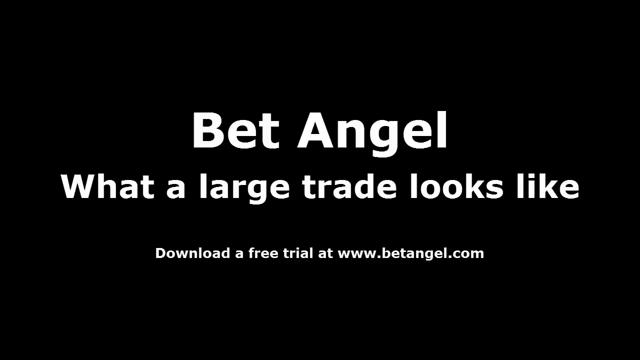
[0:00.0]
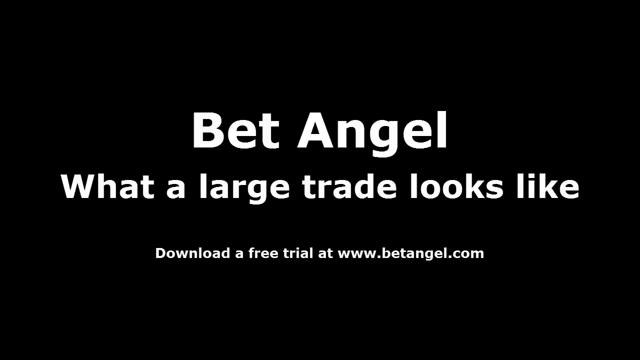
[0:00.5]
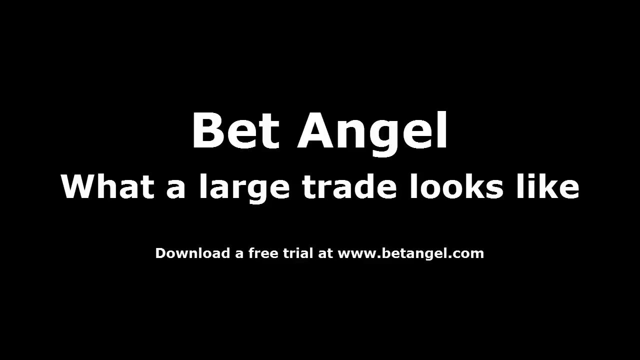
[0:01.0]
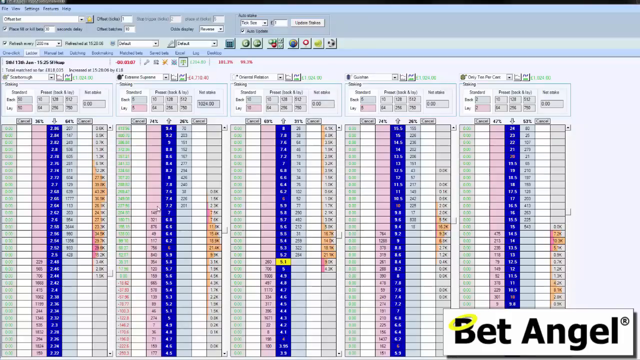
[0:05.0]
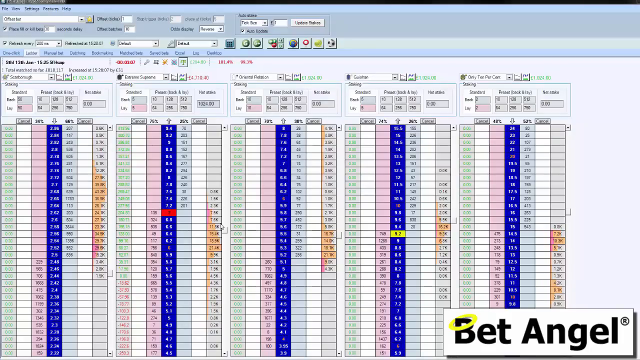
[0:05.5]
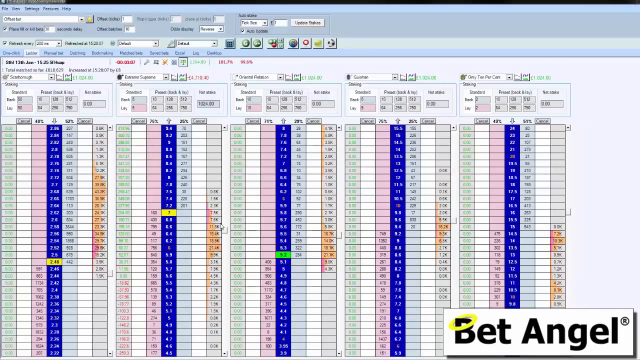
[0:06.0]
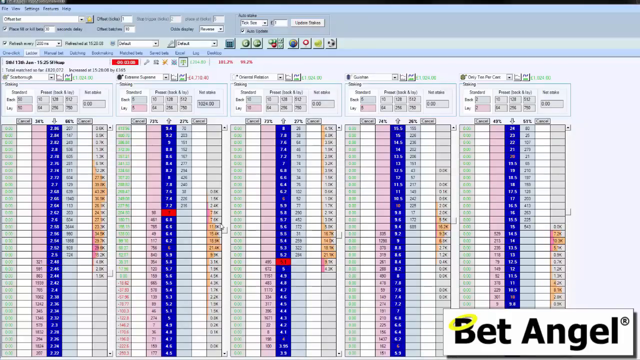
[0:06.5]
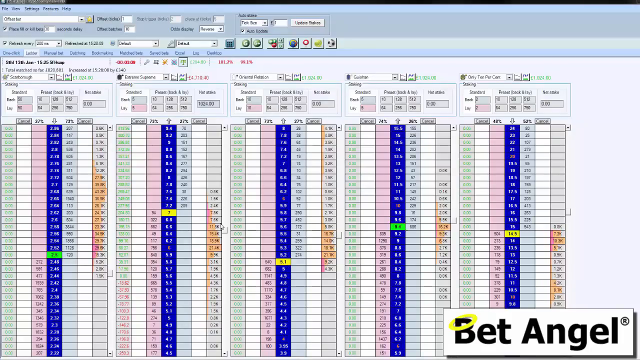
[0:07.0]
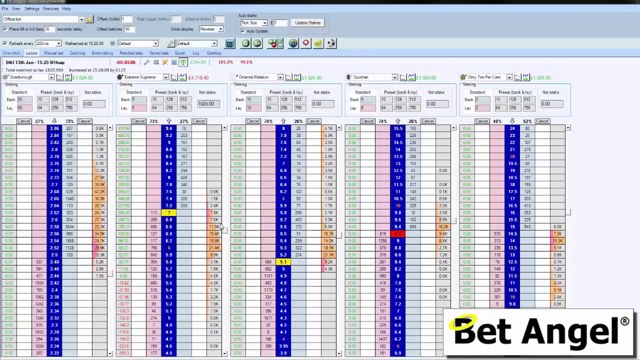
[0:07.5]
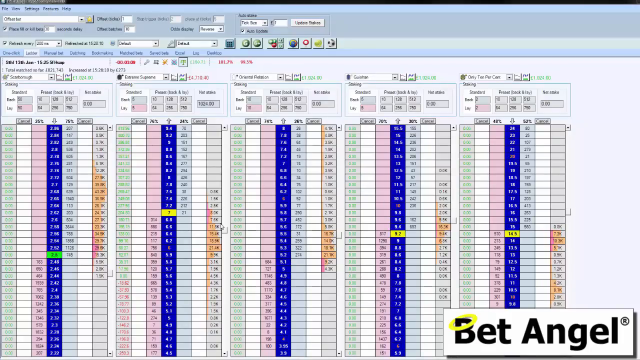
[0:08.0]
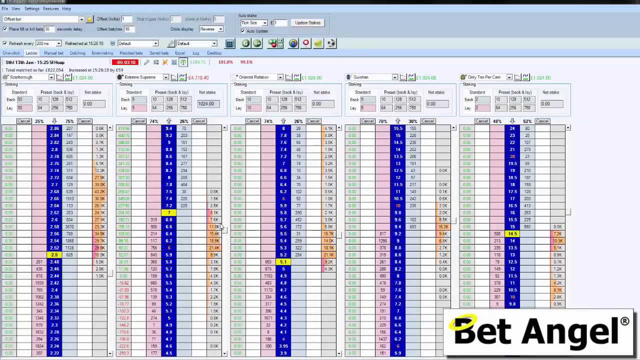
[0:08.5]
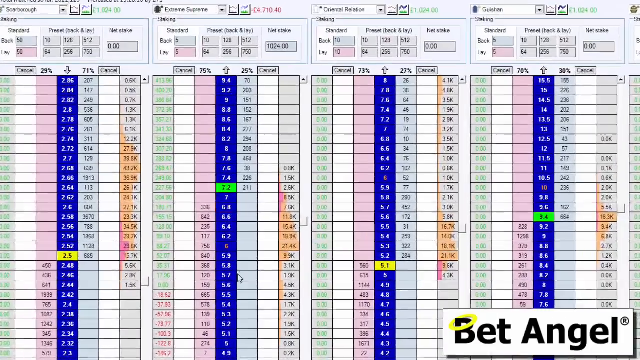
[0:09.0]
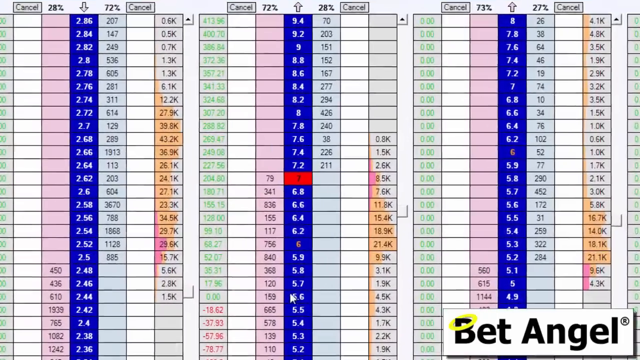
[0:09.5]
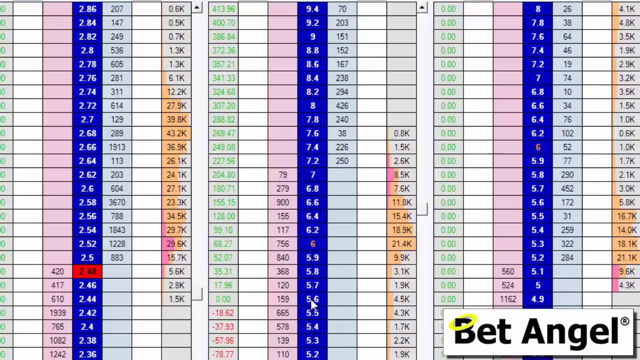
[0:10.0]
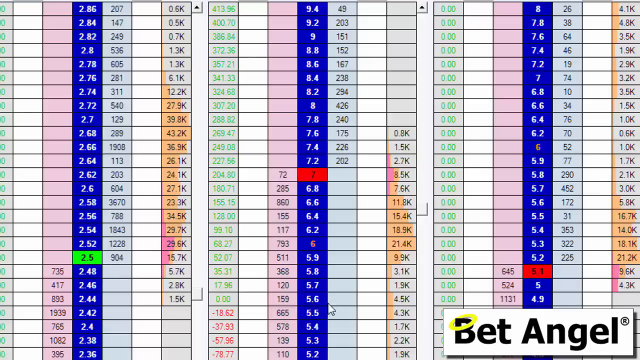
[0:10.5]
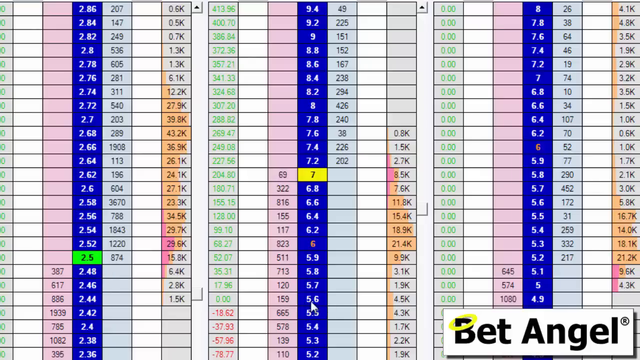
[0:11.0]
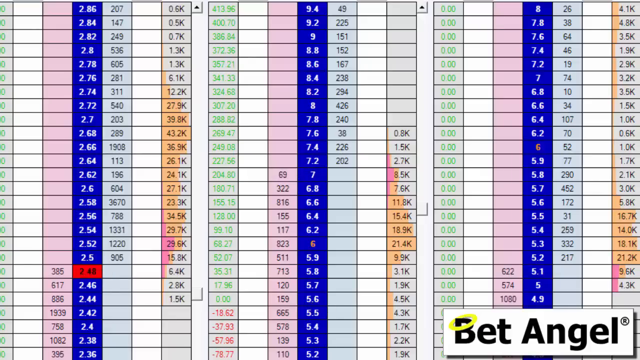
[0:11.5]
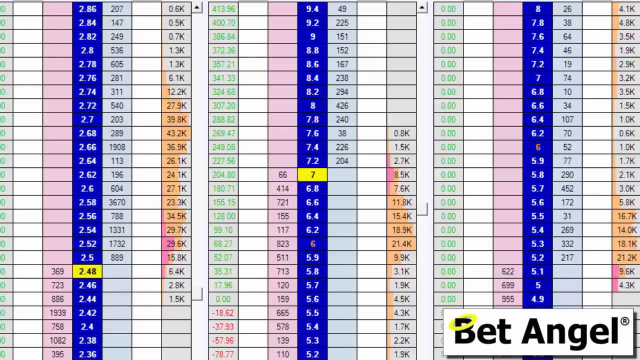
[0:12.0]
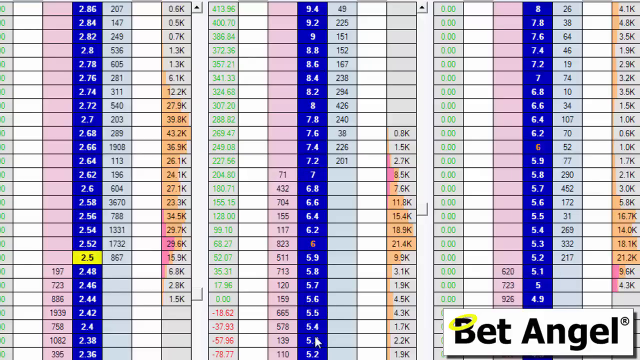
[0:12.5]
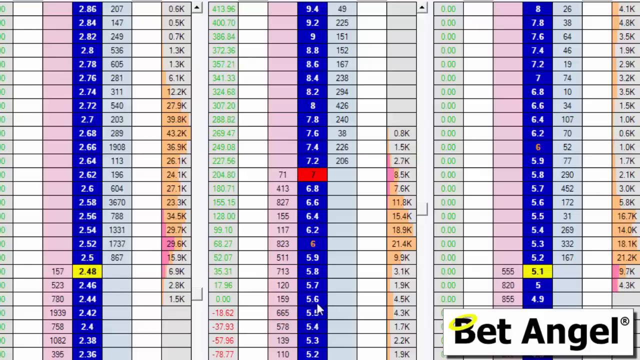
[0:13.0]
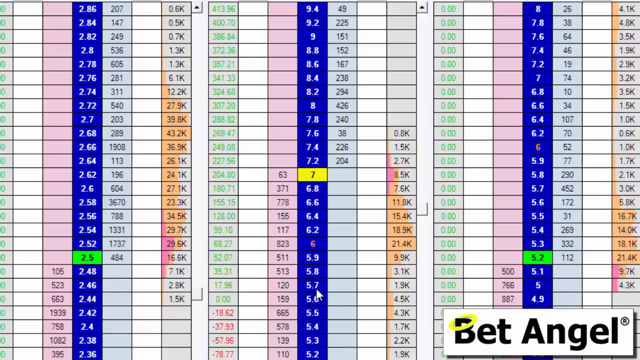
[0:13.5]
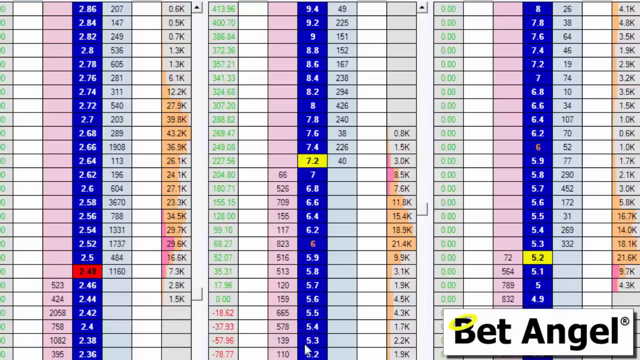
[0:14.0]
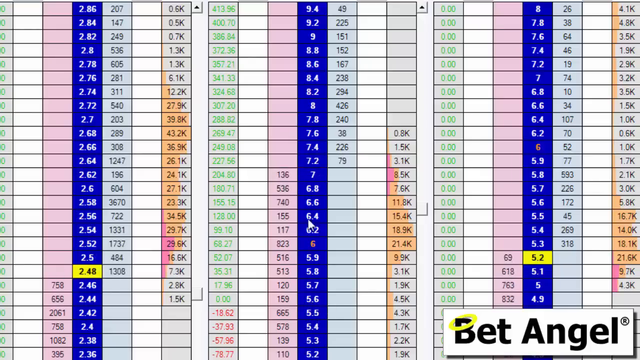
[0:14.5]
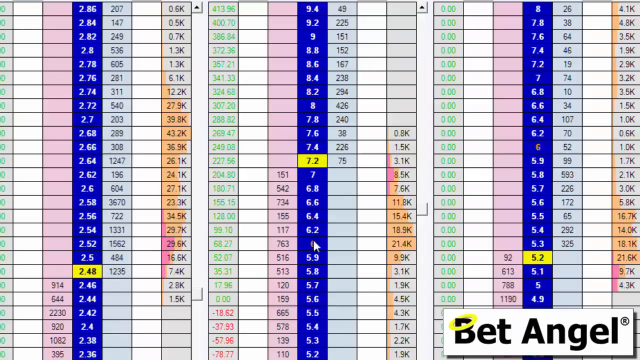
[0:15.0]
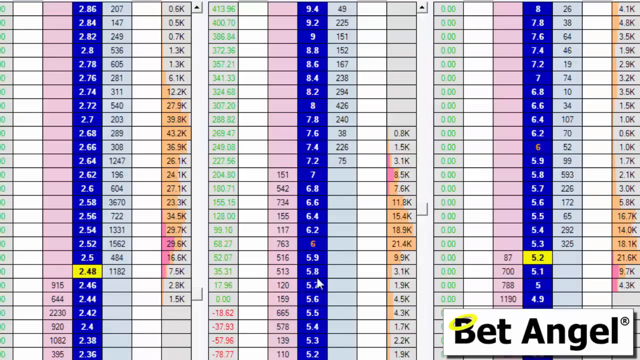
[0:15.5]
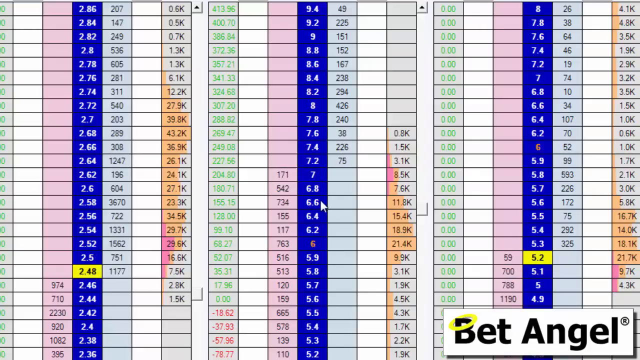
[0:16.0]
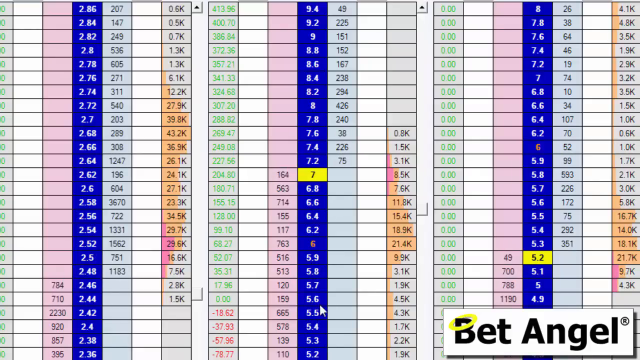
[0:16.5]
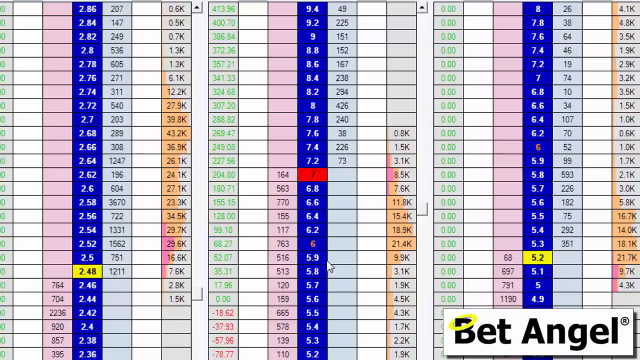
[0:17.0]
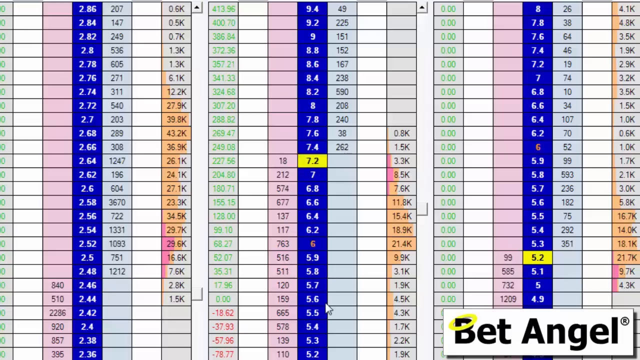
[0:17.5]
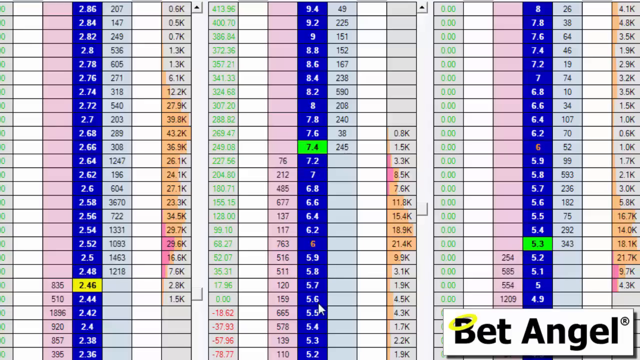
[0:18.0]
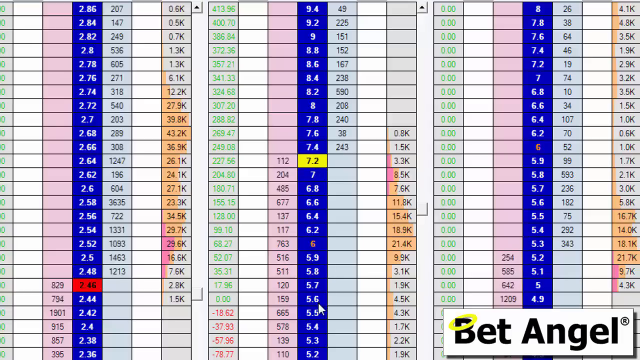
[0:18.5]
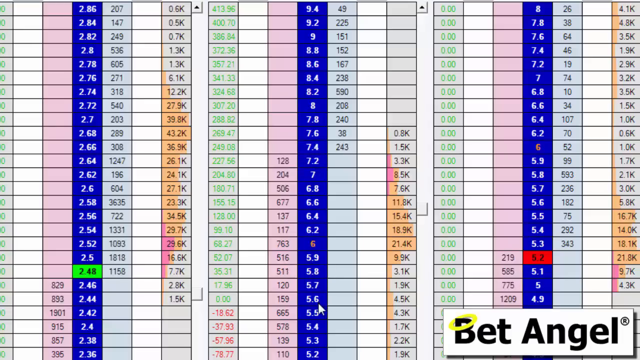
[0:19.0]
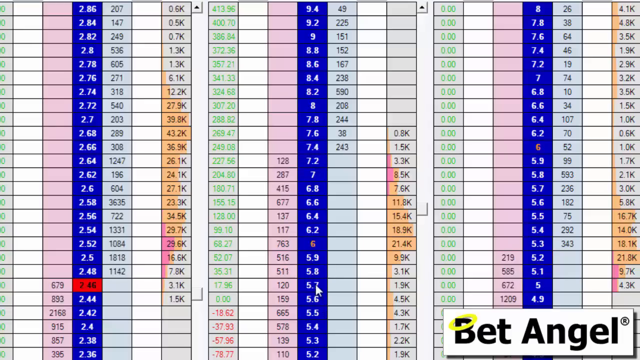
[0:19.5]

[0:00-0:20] A solid black background displays the text "BetAngel, what a large trade looks like. Download a free trial at www.betangel.com." The video then turns to a working graph with many colors, with different areas being highlighted in yellow, green and red. There are three columns of blue, and these appear to be trades being monitored very closely by a computer. There is a lot of action, and the numbers keep changing very quickly. Up at the top there is a lot of information, all digital. The screen gives a close-up and zooms in on the three columns, where the numbers are ever changing and seem to be active trades. Some of the numbers are highlighted in colors, and the graph looks like it is blinking quickly.